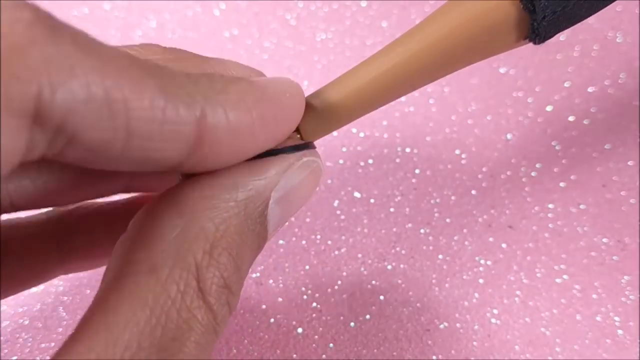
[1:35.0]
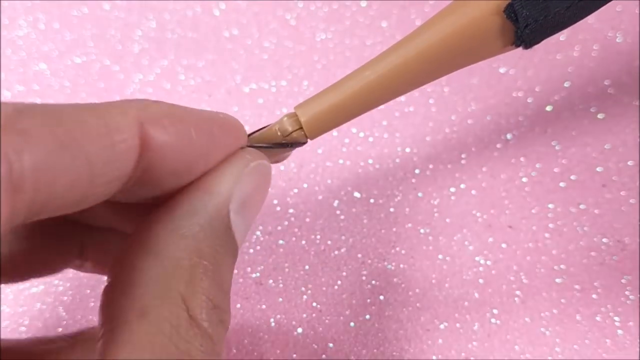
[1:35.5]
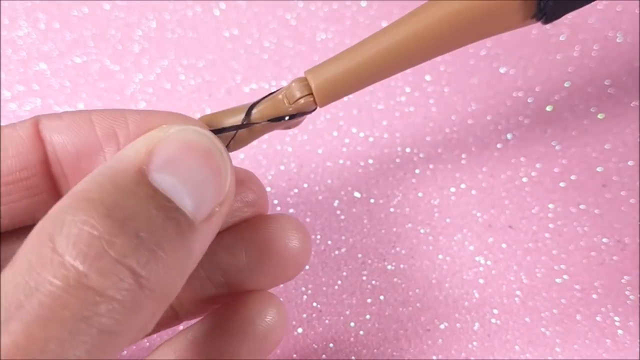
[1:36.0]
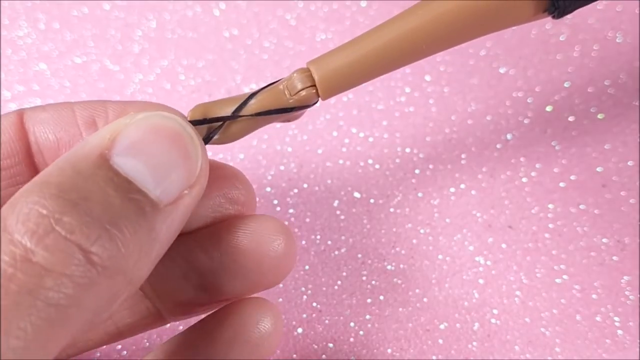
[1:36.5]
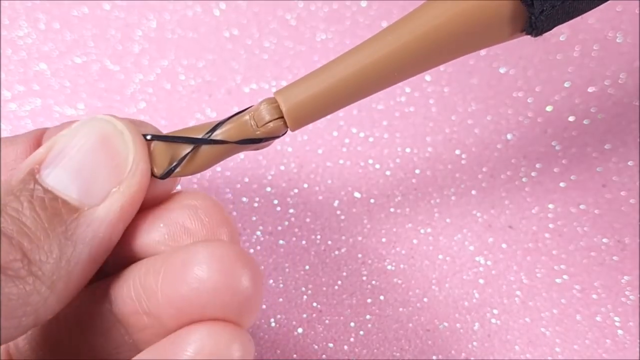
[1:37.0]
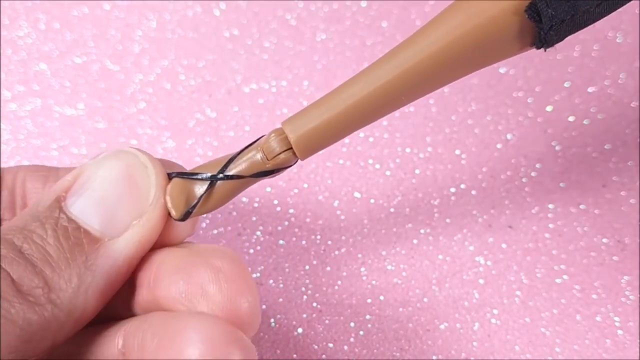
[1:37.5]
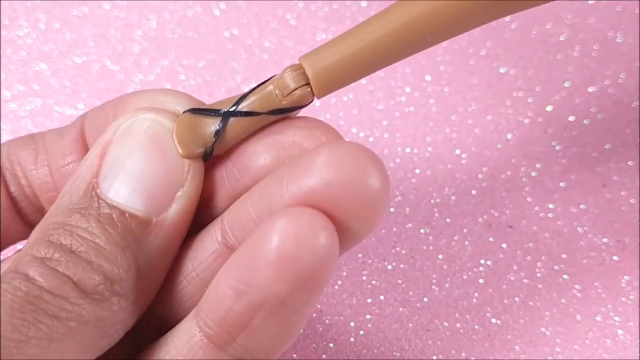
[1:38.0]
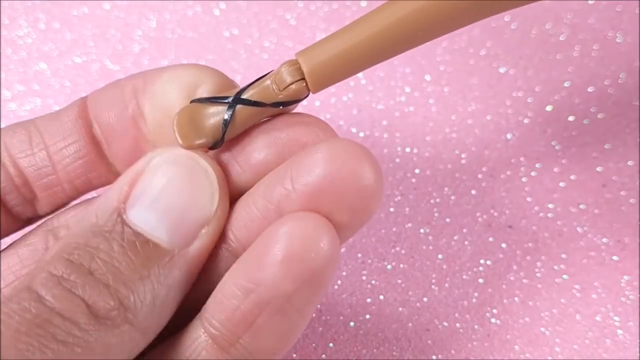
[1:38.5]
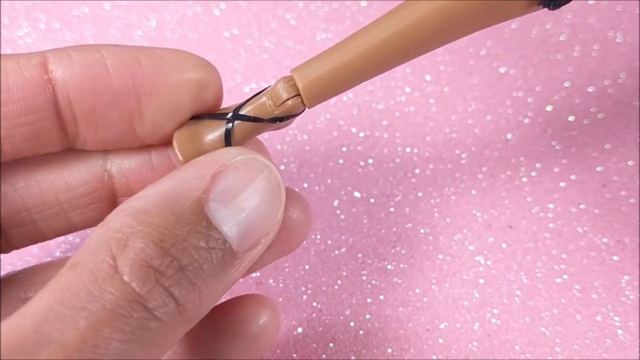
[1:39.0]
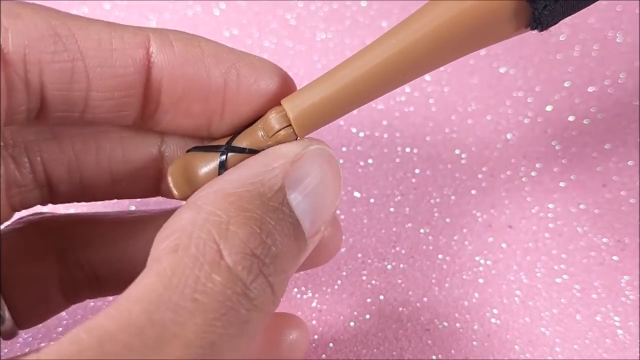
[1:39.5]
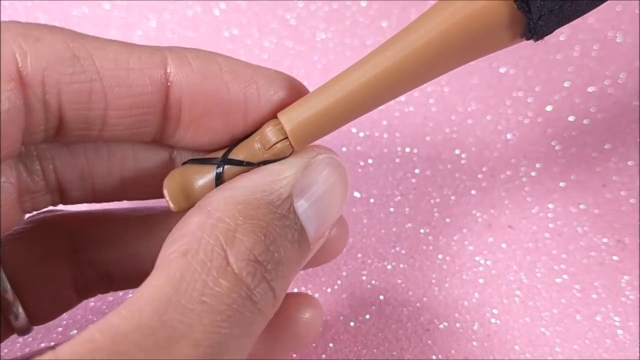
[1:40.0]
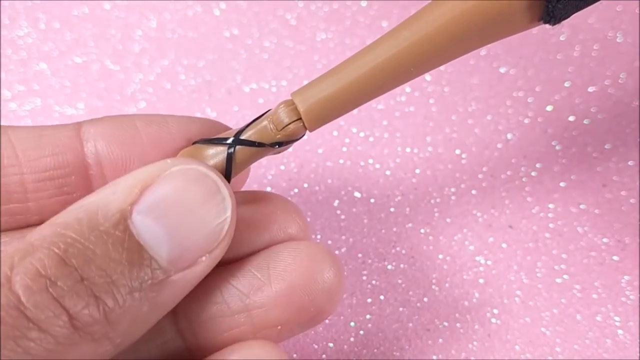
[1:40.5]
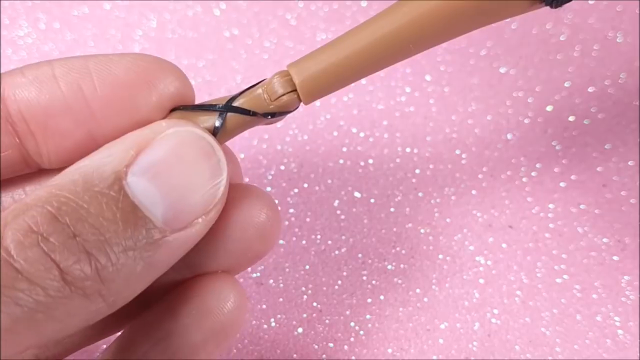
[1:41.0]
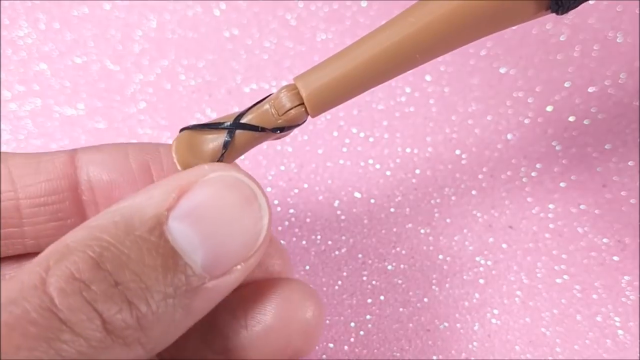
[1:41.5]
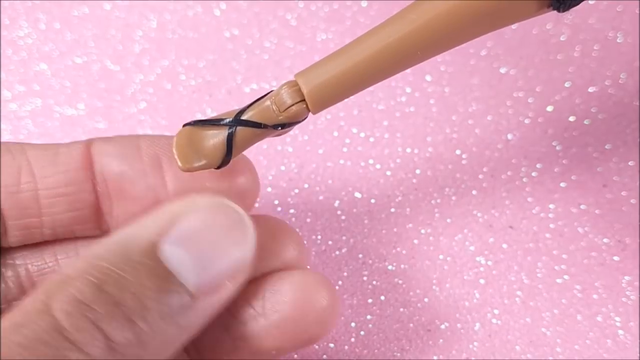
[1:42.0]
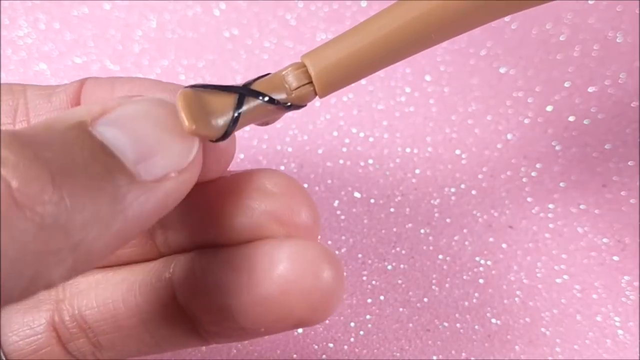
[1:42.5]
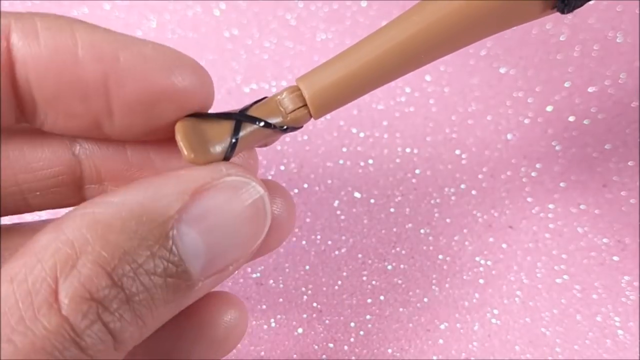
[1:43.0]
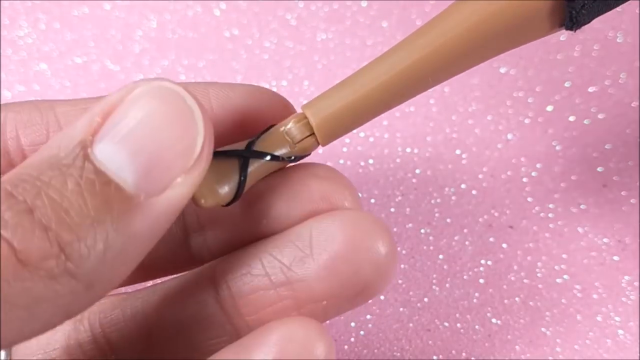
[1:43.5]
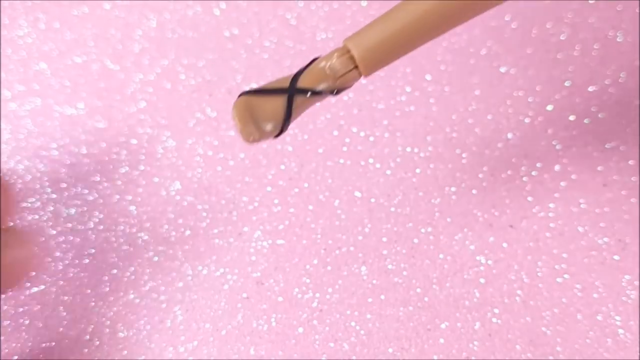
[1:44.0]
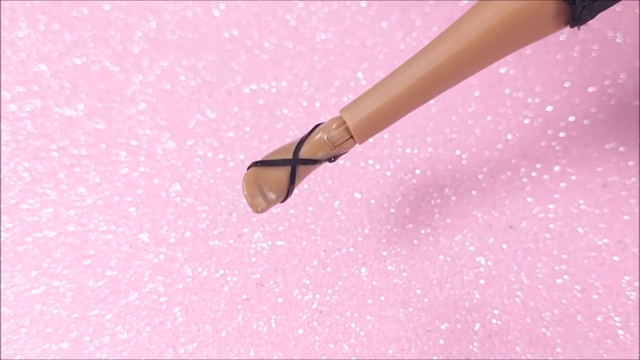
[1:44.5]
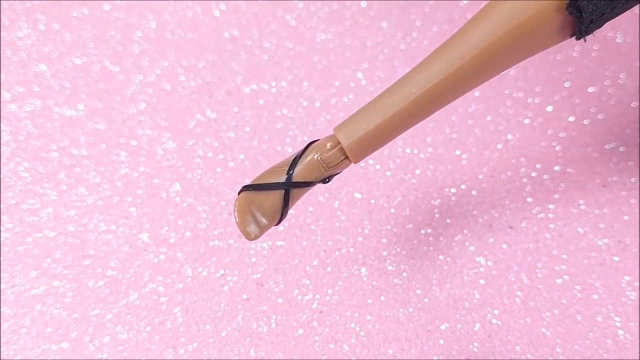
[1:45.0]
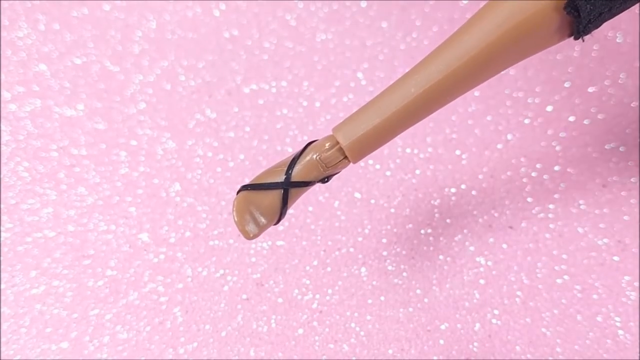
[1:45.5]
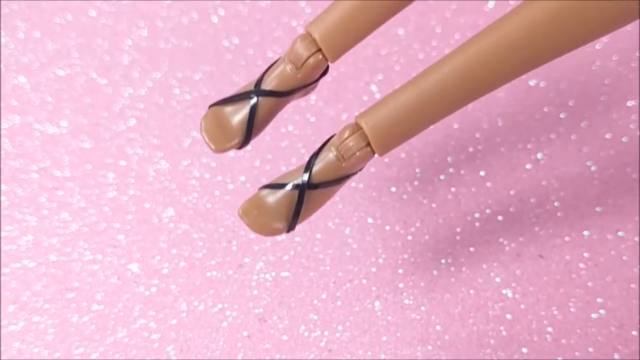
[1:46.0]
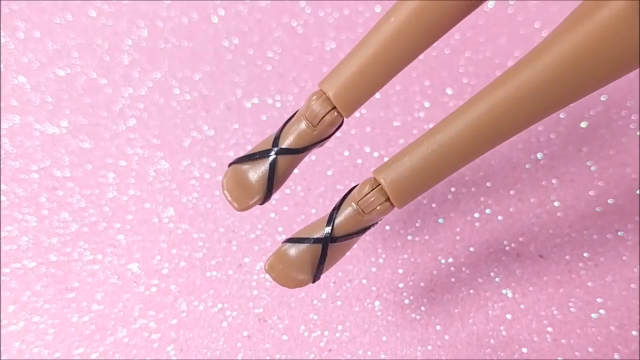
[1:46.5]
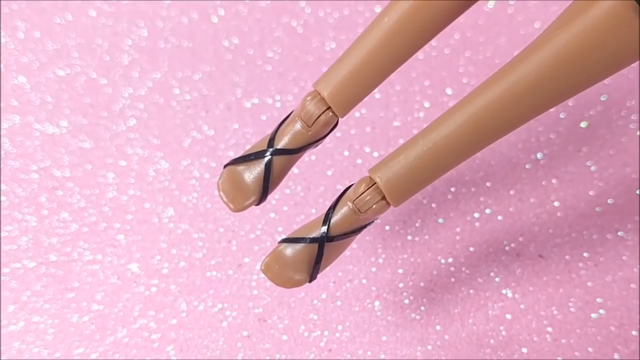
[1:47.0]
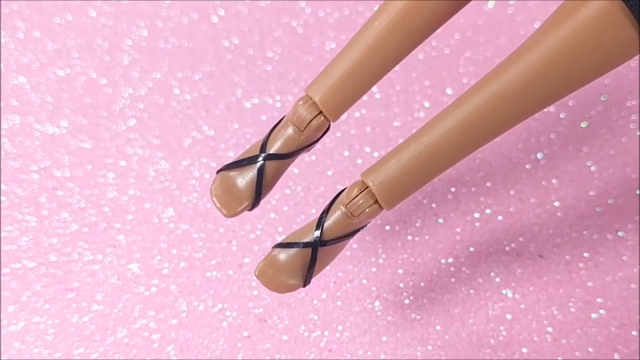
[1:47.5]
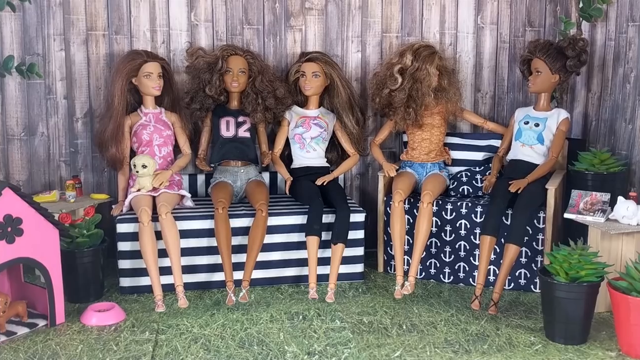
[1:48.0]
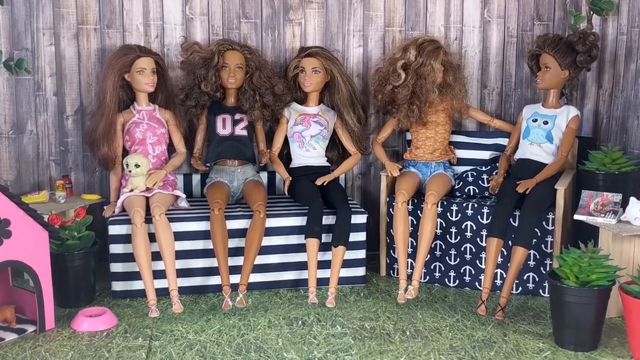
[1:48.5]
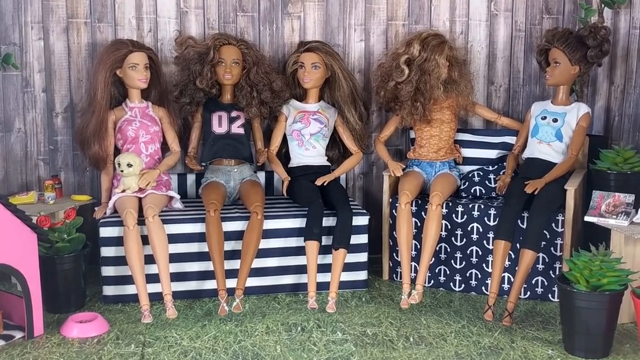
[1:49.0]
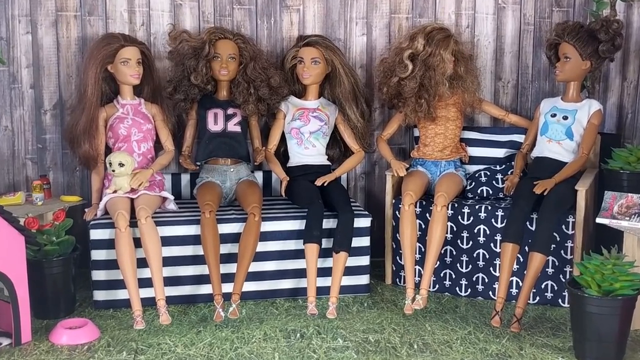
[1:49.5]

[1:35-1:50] The black rubber bands are used to make a black sandal, with a sticker or something sticky added to the bottom of the feet to hold the bands together. The black sandals are shown off, very basic but realistic. The hands apparently belong to a black woman; they look like feminine hands, though they could be a man's. The nails are not painted but look manicured. Everything is very pink, including the sparkly pink background where the sandals are made. At the end, a short, fast clip shows some of the add-ons, too quick to identify anything other than a book bag and other accessories.